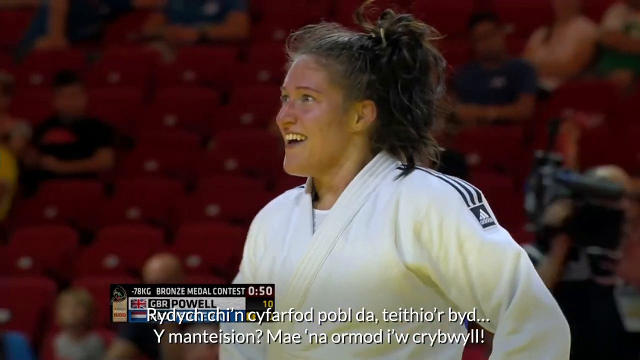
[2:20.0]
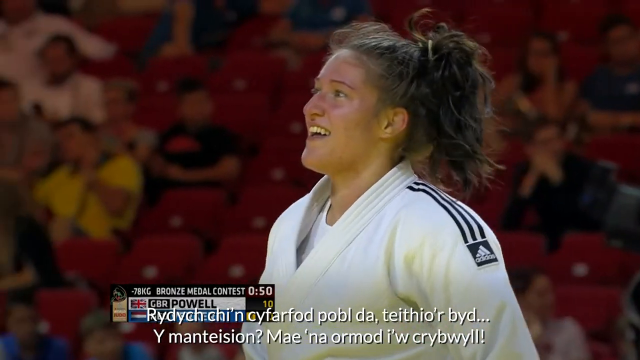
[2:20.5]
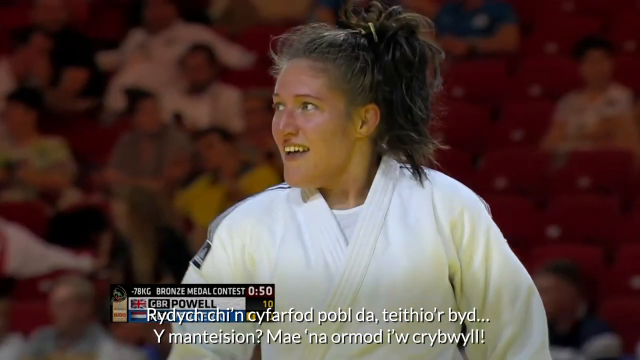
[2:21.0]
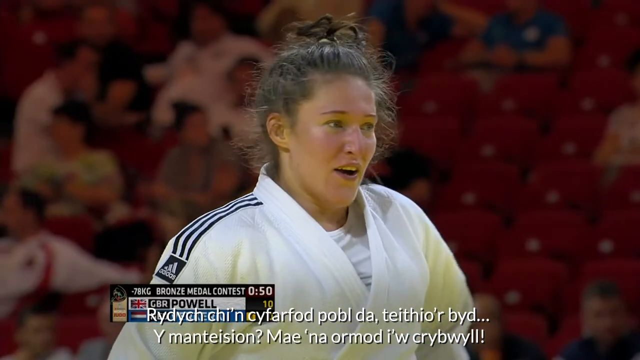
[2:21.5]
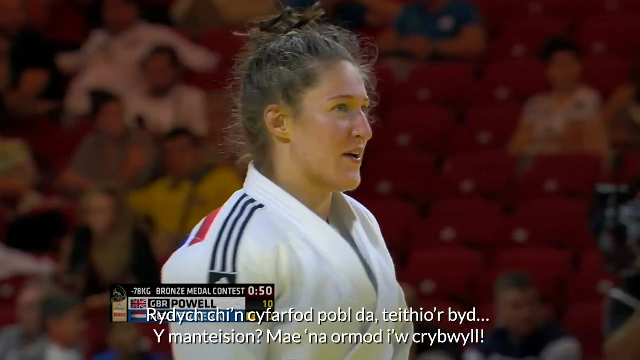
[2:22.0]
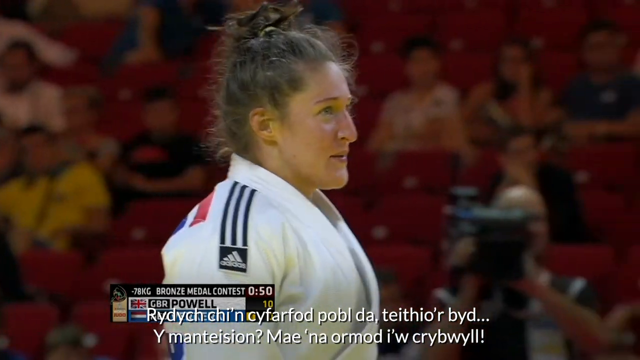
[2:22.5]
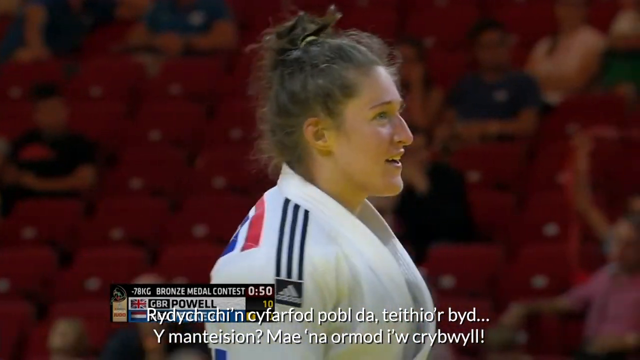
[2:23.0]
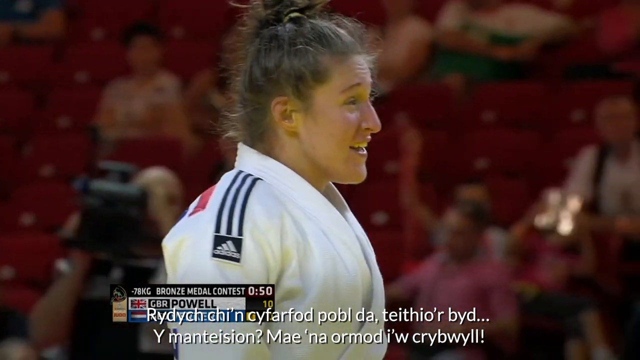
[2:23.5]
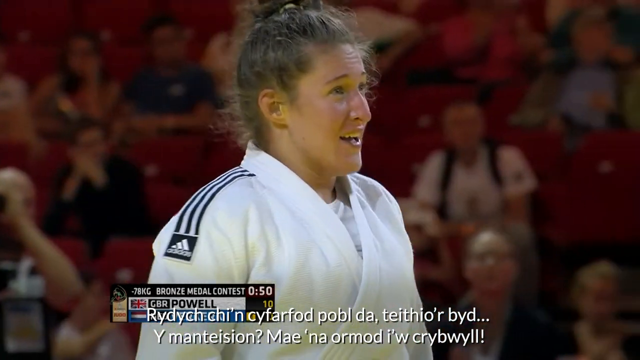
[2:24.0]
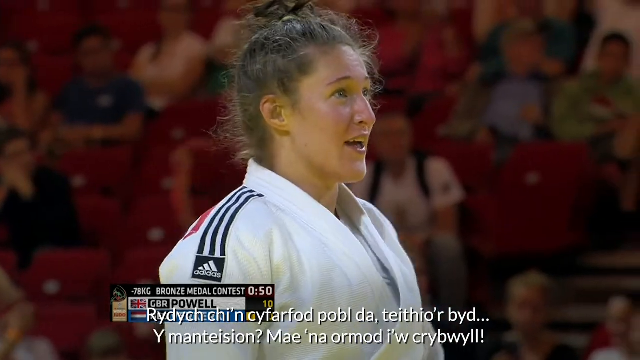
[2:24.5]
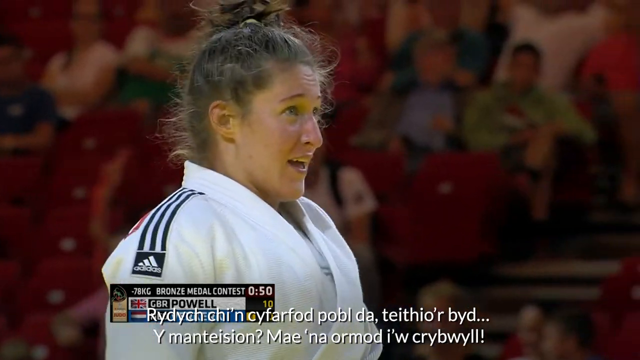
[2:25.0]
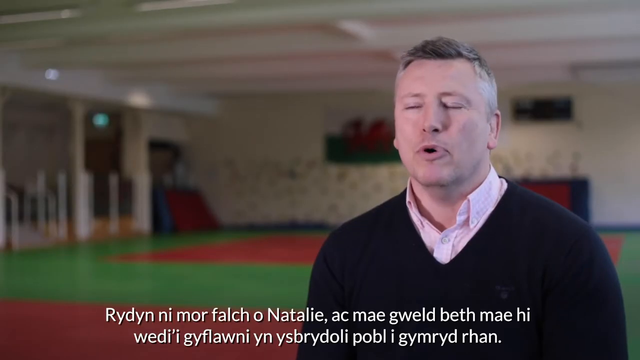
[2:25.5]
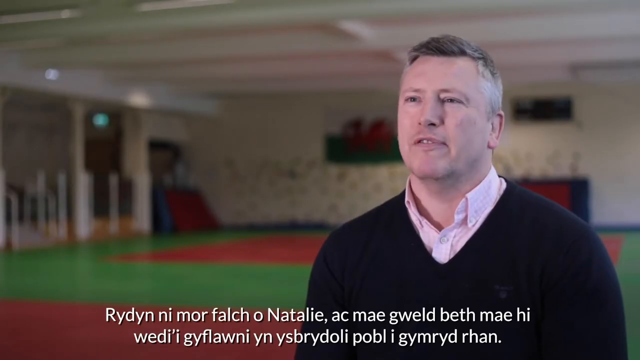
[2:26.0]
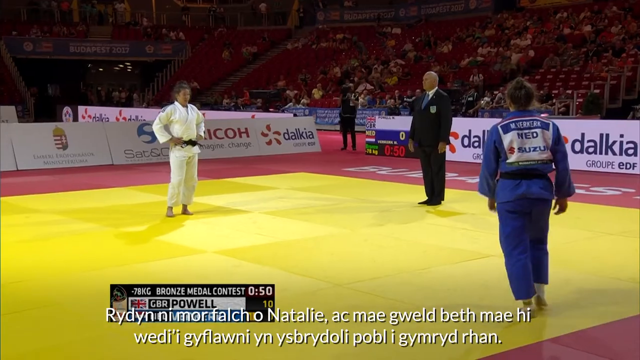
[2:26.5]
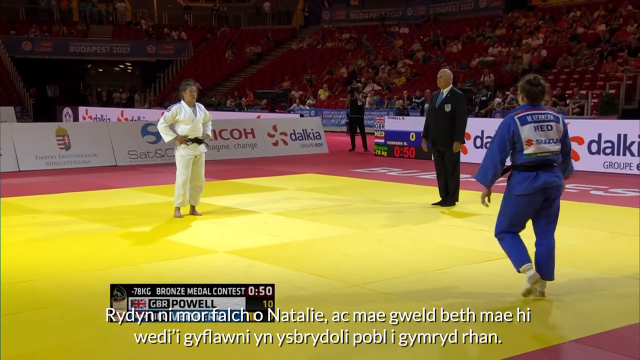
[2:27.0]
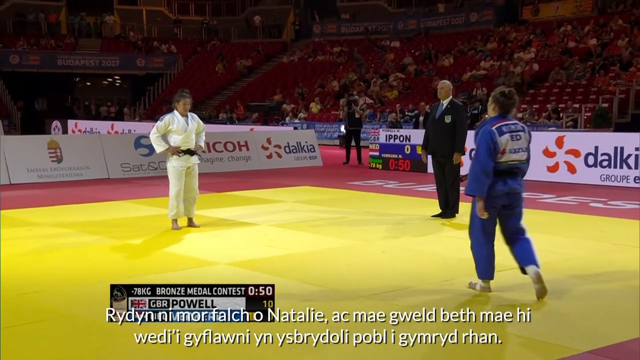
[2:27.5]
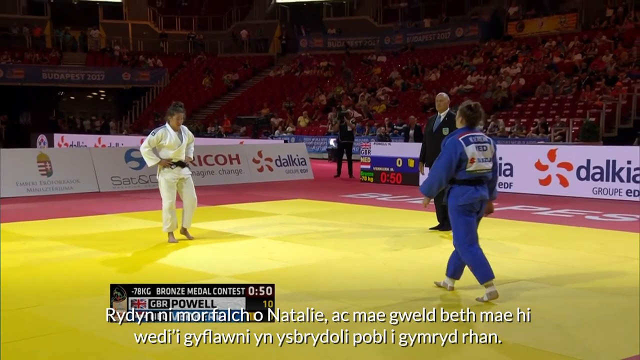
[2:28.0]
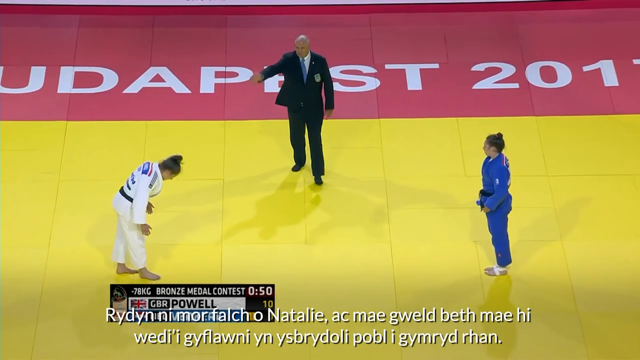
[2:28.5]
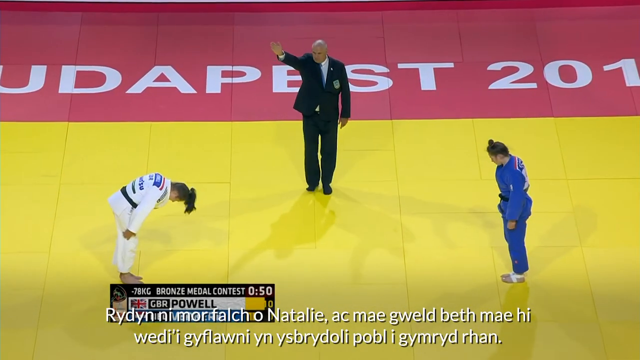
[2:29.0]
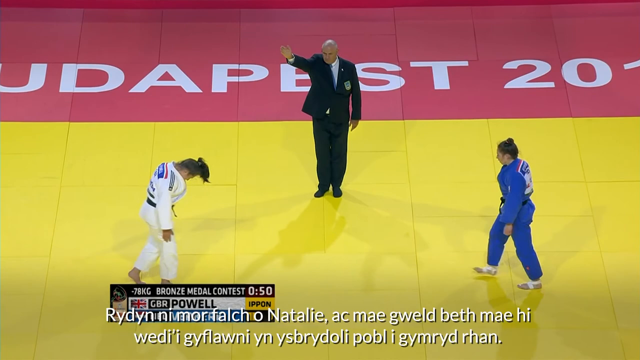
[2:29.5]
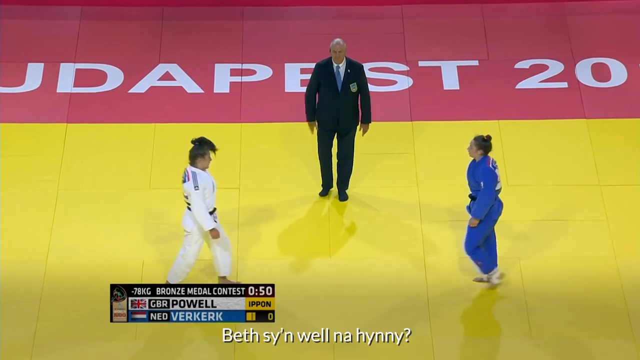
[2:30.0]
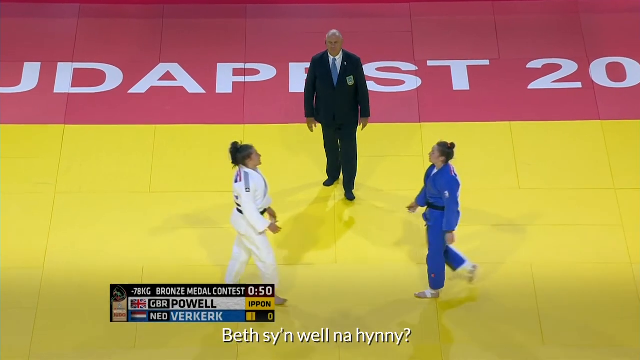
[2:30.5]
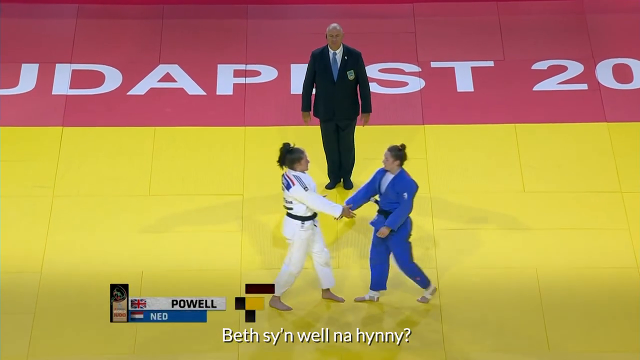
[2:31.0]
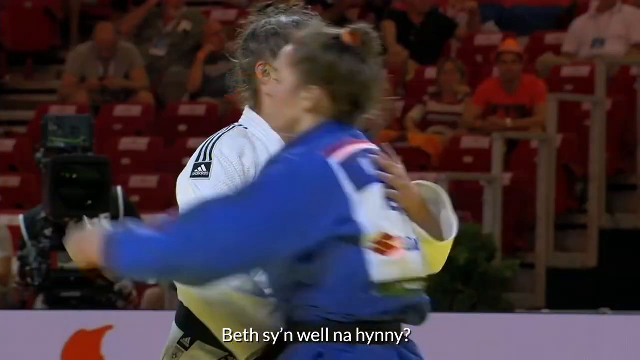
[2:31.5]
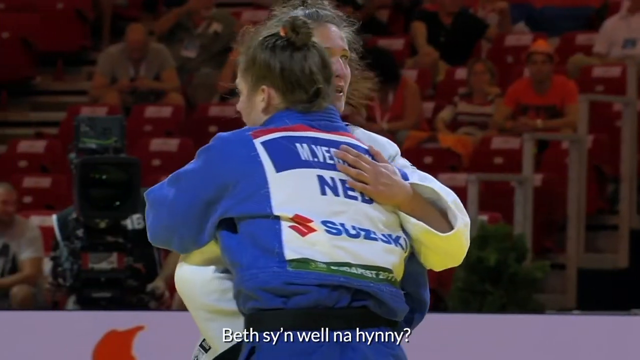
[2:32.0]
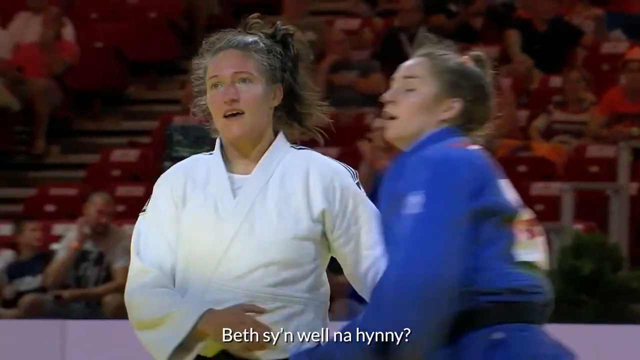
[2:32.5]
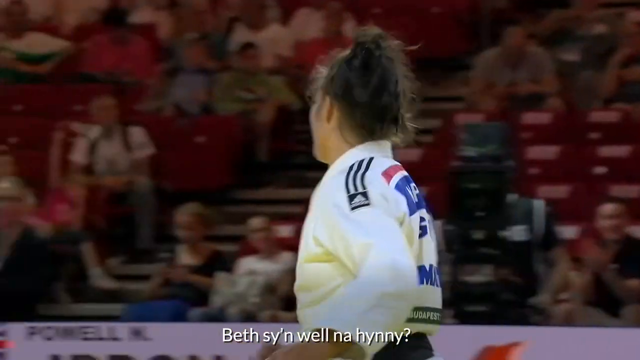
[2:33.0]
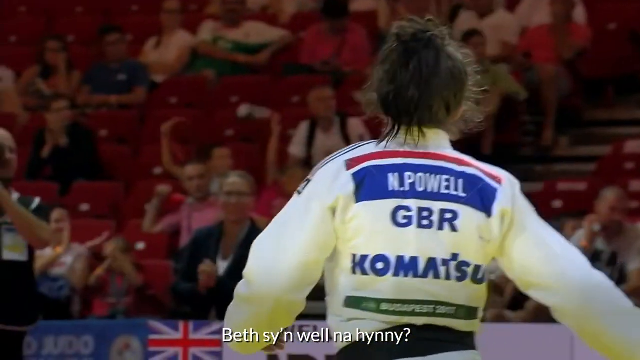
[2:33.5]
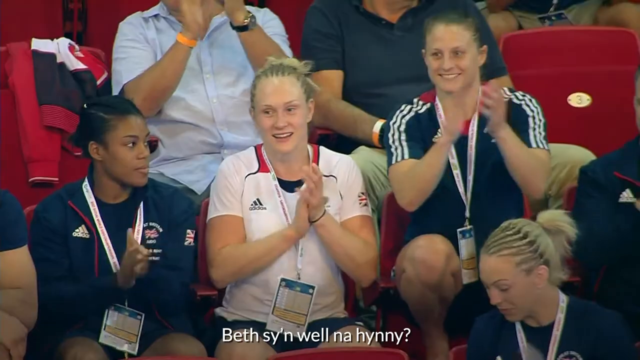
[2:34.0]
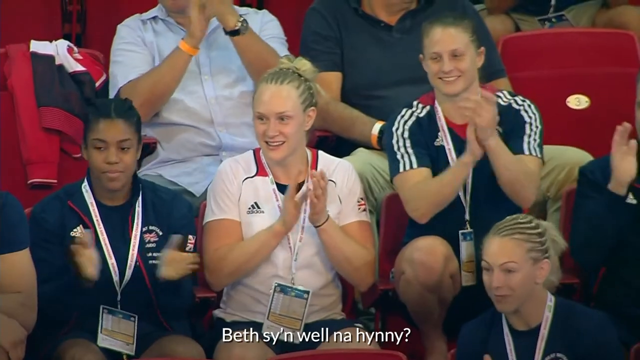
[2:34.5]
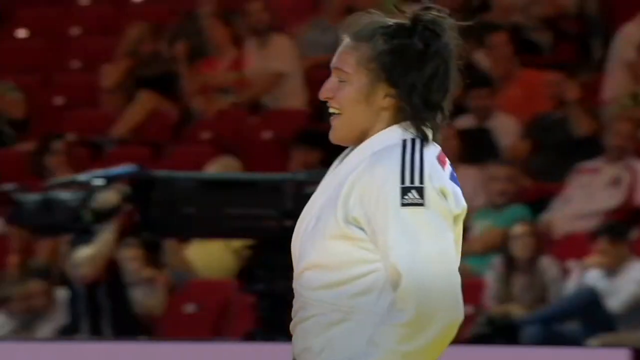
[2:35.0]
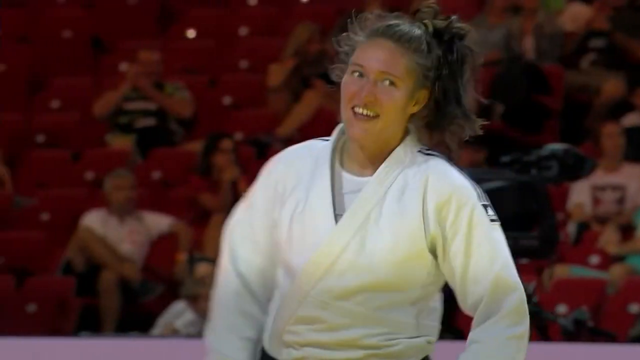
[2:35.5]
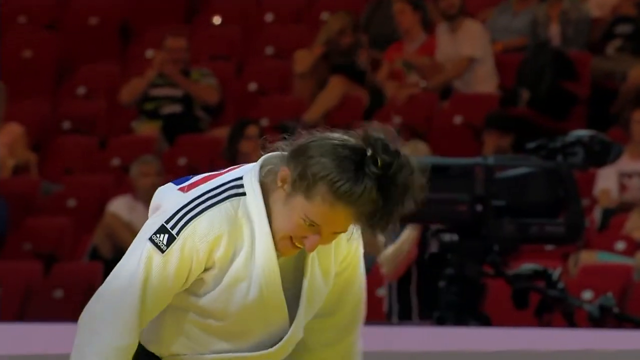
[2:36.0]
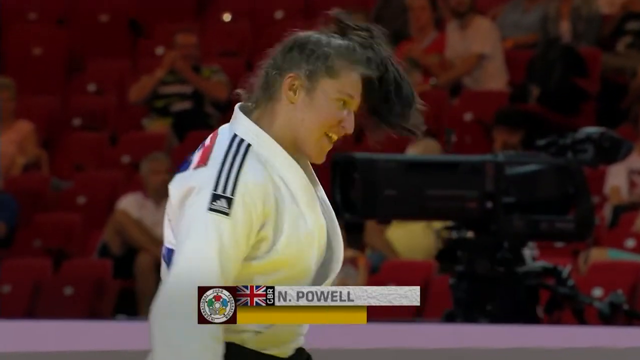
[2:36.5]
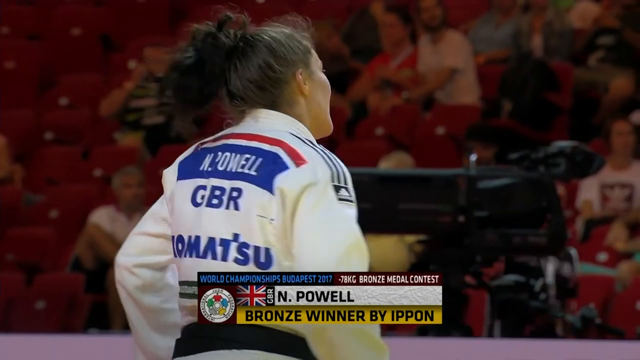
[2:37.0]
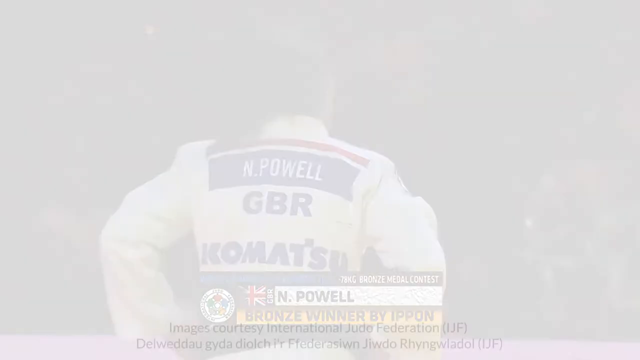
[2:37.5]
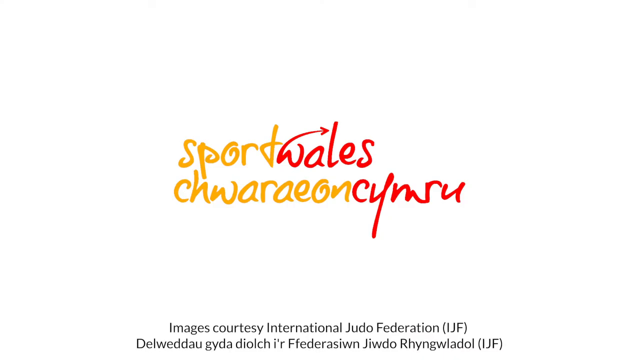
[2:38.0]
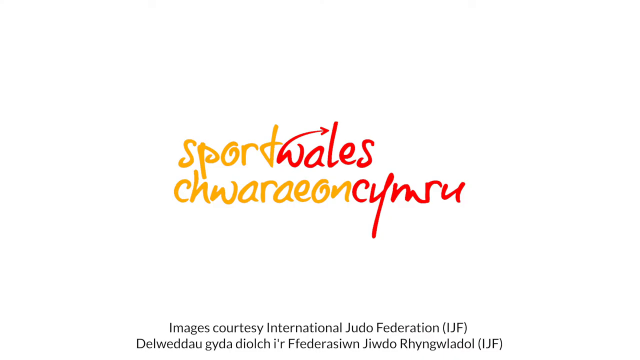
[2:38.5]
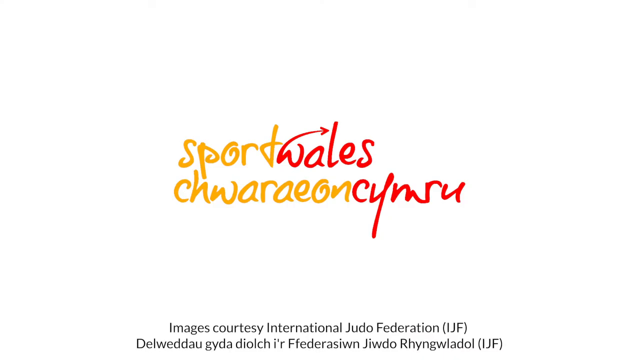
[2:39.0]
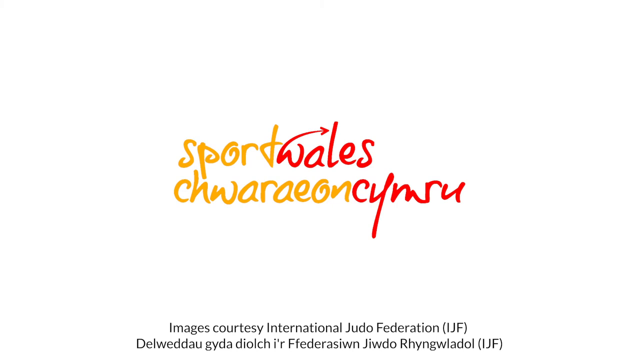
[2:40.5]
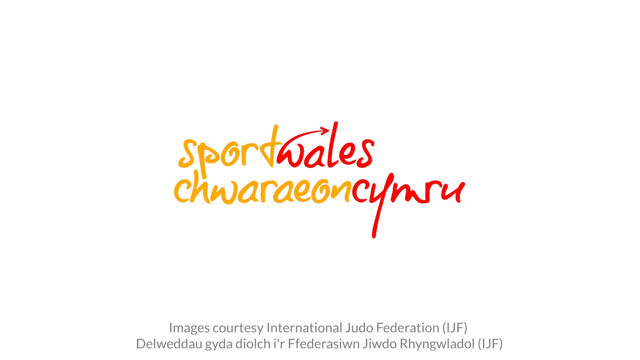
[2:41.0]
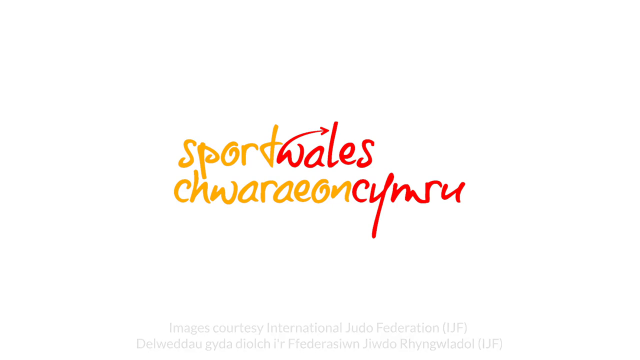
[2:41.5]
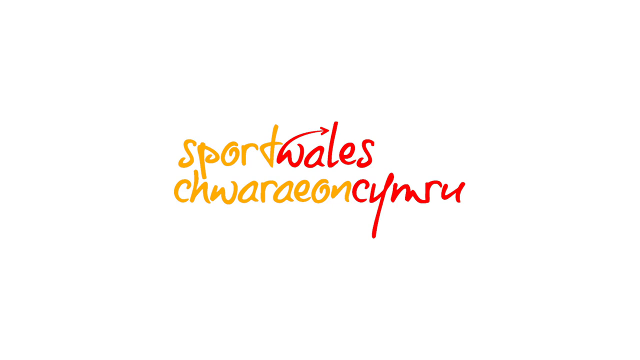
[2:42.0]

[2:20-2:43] Two jujutsu fighters compete in a high-intensity match, each trying to take the other down to the ground. The word "Budapest" is on the ground. One player is from Great Britain and the other is from another country. In the background, there are not many people watching.